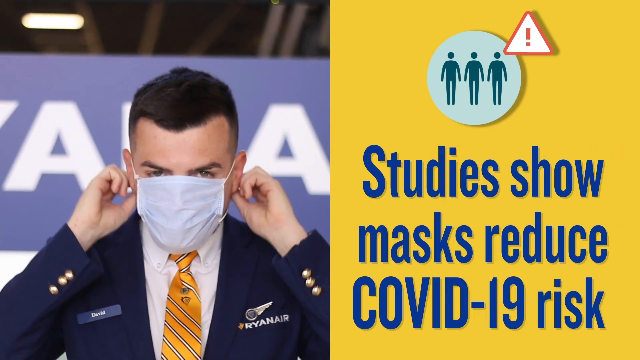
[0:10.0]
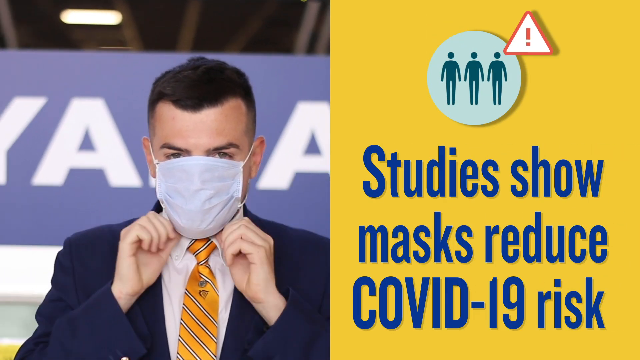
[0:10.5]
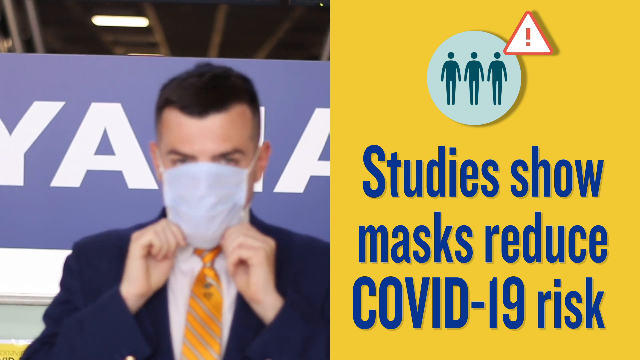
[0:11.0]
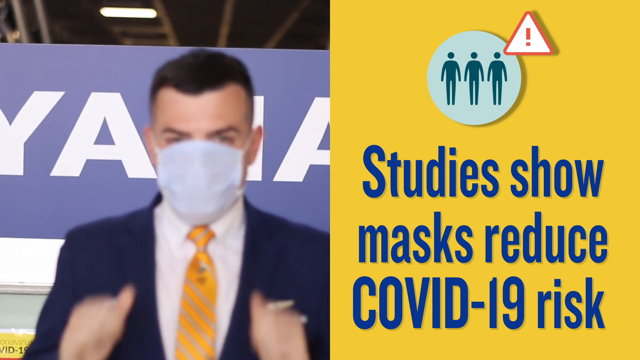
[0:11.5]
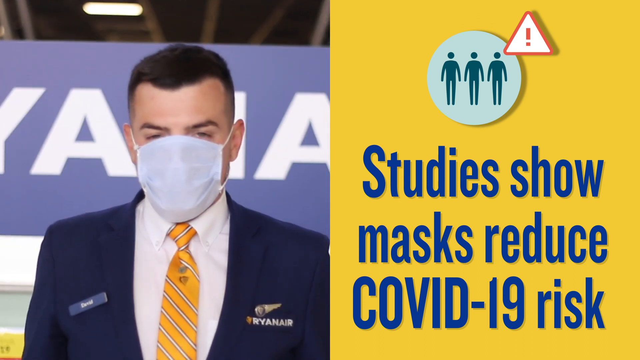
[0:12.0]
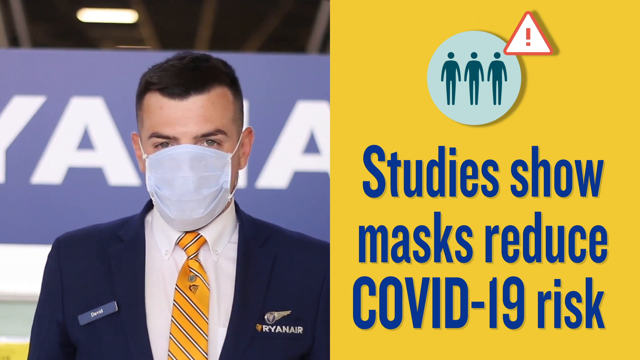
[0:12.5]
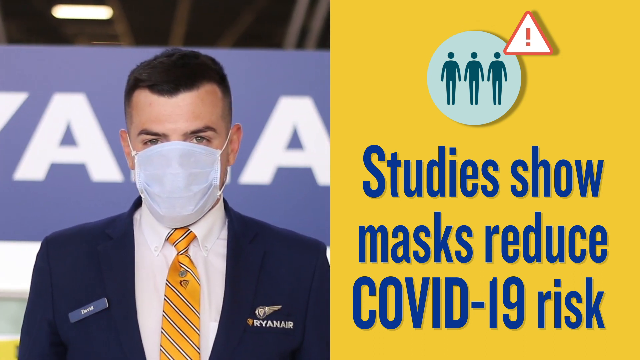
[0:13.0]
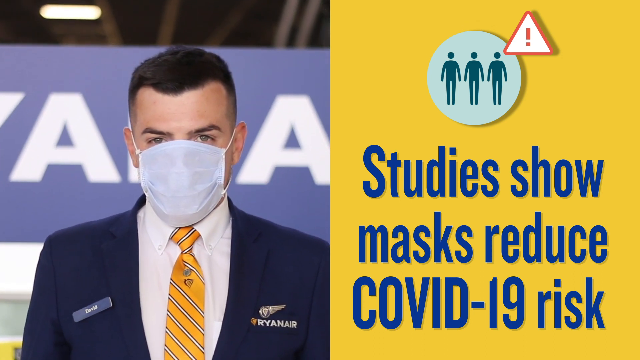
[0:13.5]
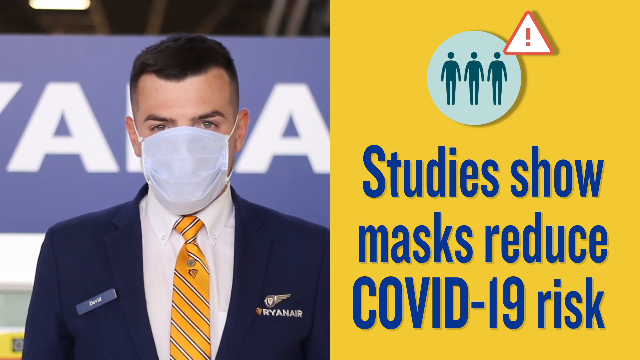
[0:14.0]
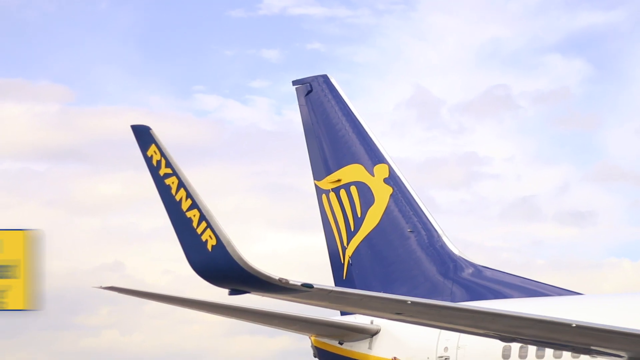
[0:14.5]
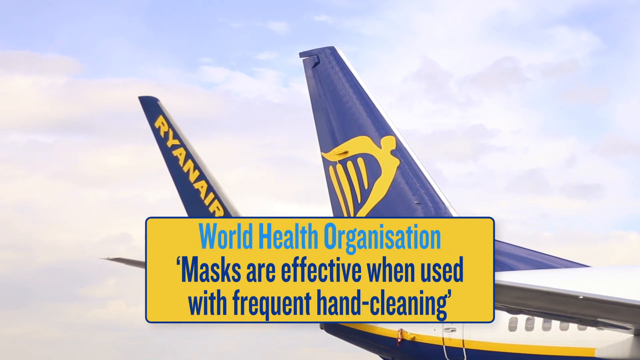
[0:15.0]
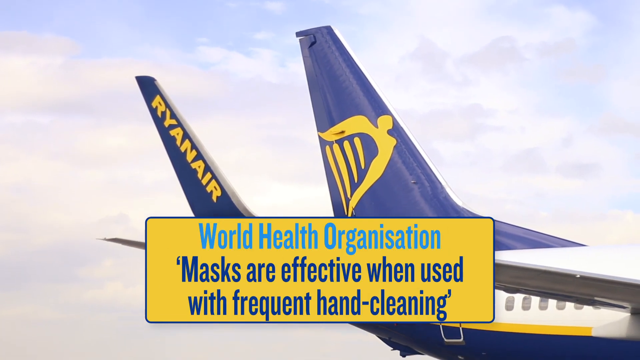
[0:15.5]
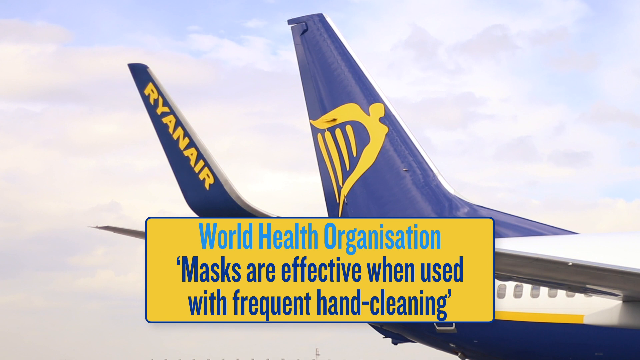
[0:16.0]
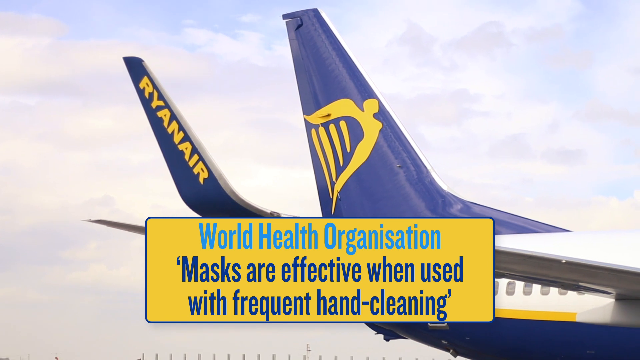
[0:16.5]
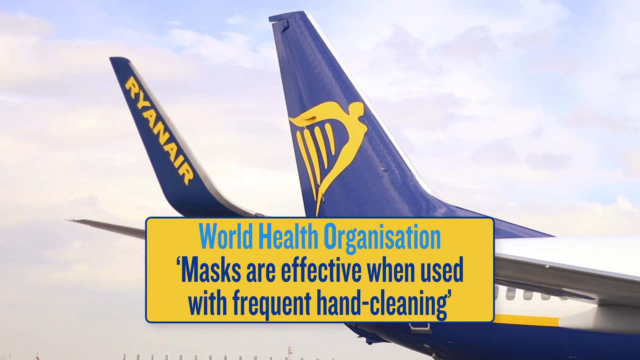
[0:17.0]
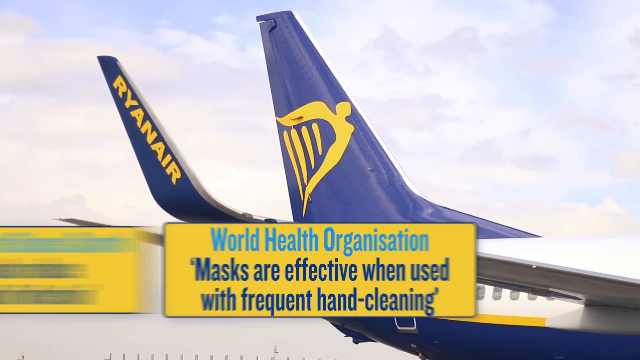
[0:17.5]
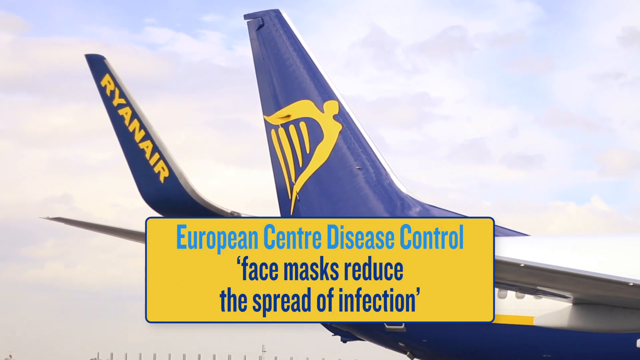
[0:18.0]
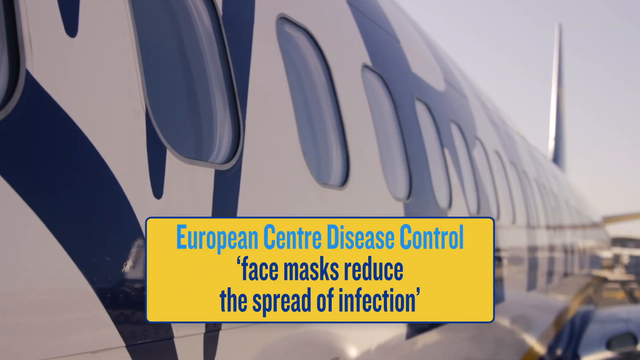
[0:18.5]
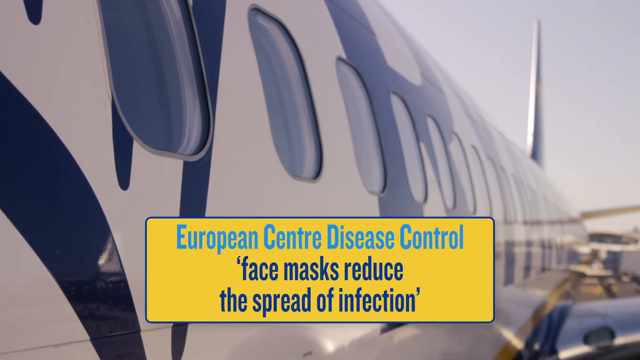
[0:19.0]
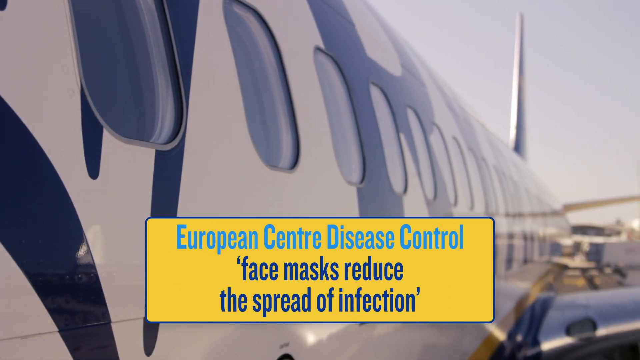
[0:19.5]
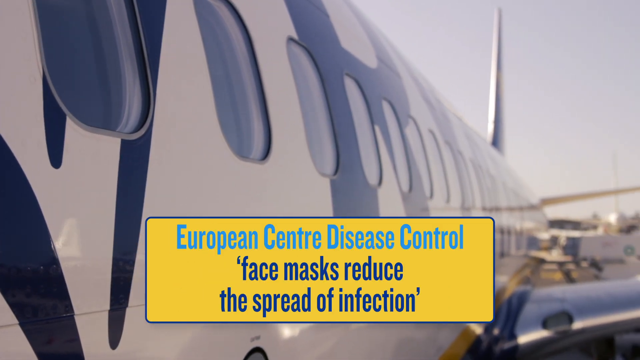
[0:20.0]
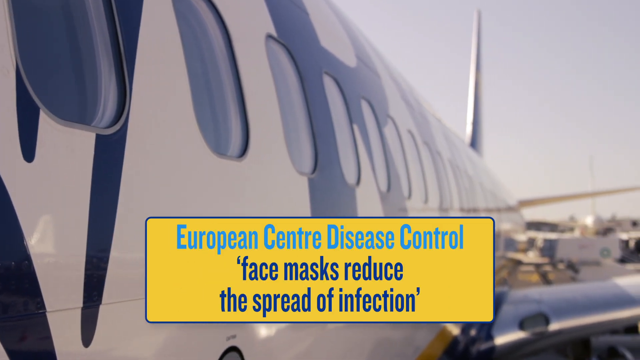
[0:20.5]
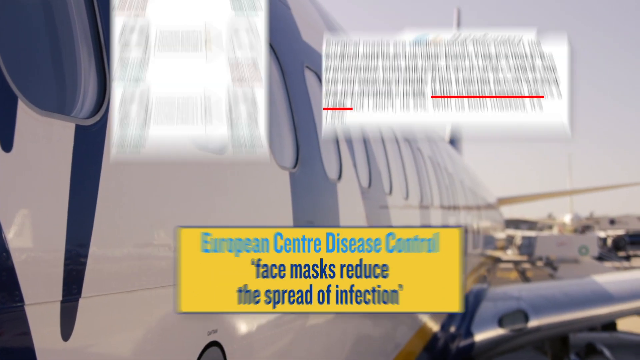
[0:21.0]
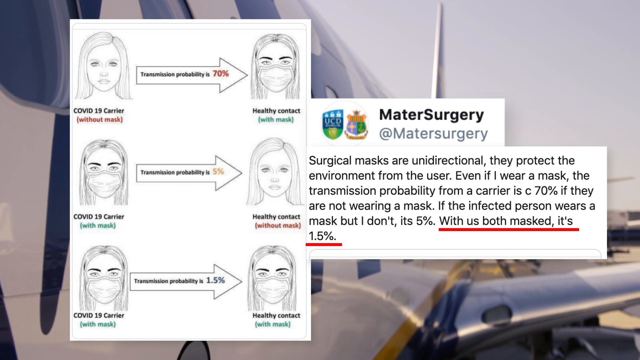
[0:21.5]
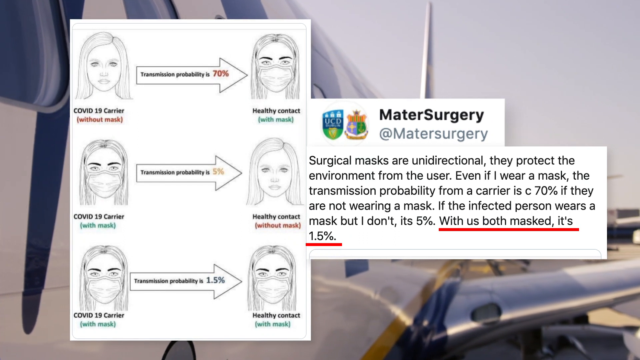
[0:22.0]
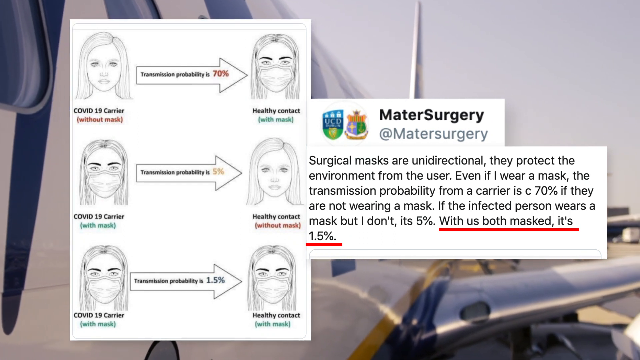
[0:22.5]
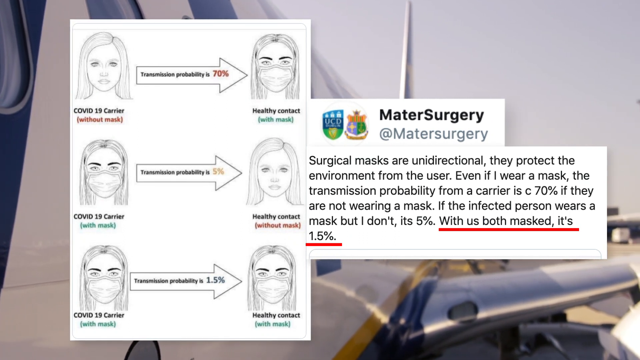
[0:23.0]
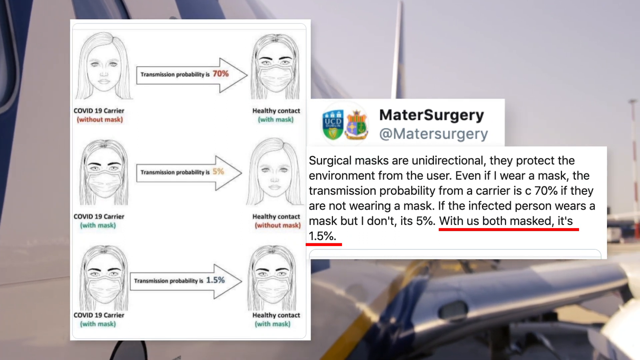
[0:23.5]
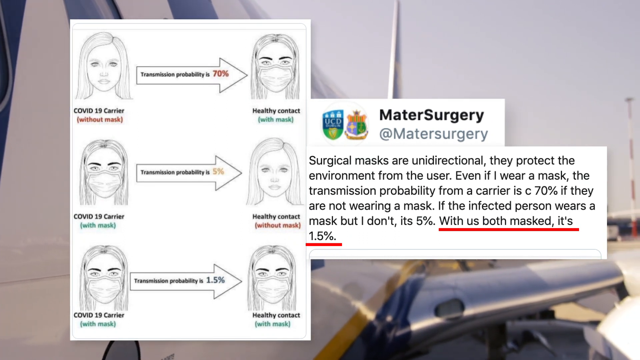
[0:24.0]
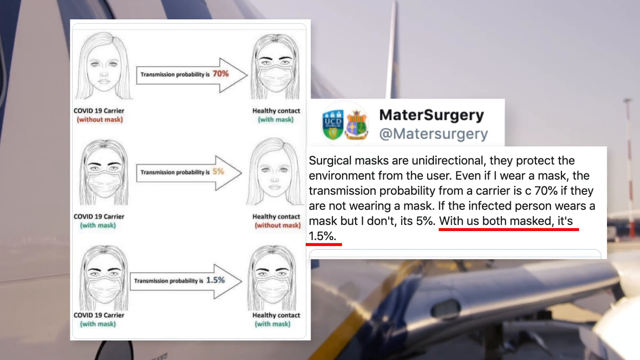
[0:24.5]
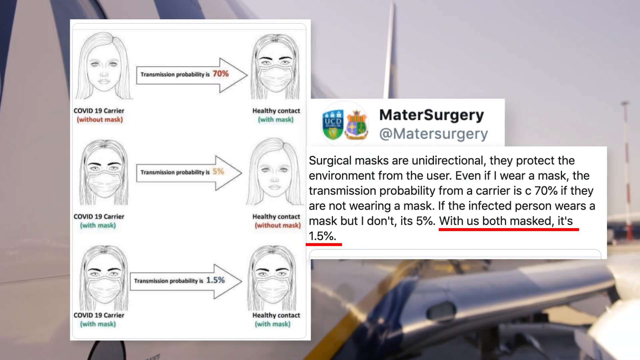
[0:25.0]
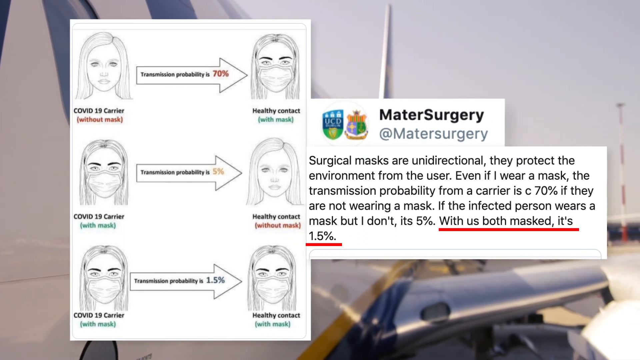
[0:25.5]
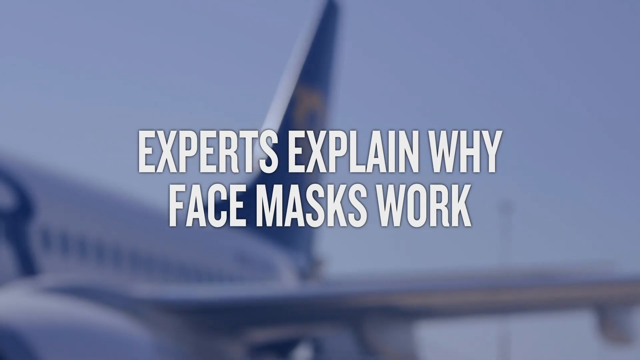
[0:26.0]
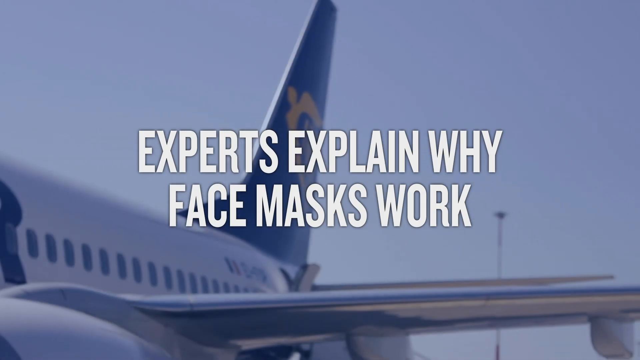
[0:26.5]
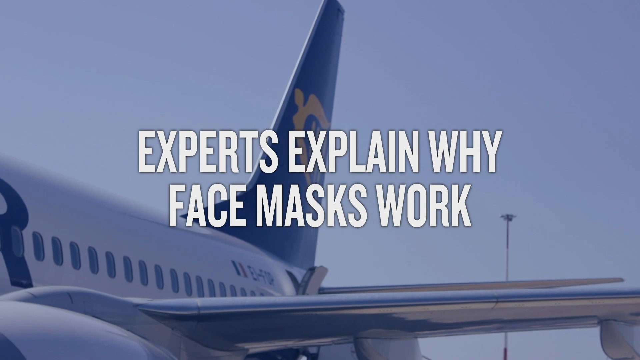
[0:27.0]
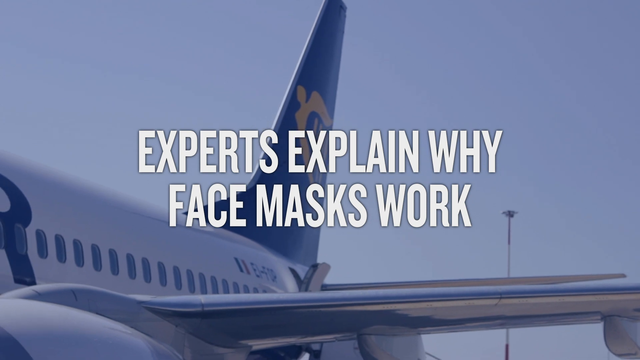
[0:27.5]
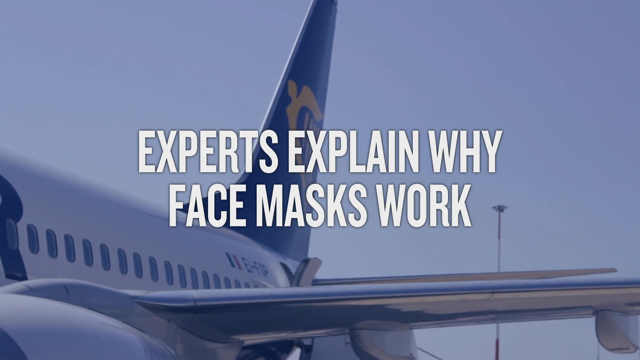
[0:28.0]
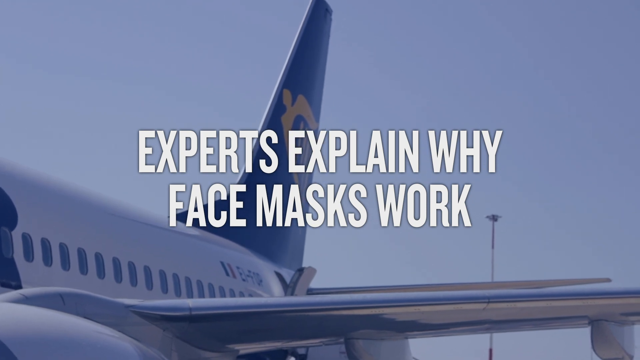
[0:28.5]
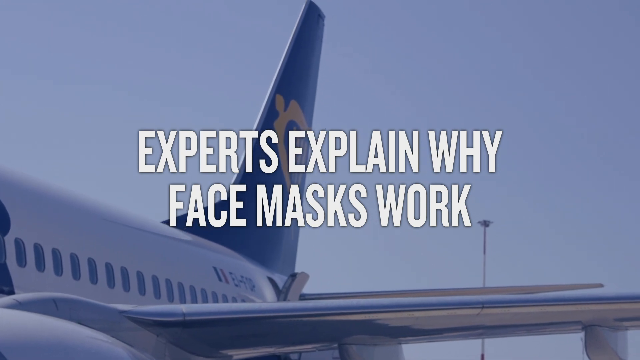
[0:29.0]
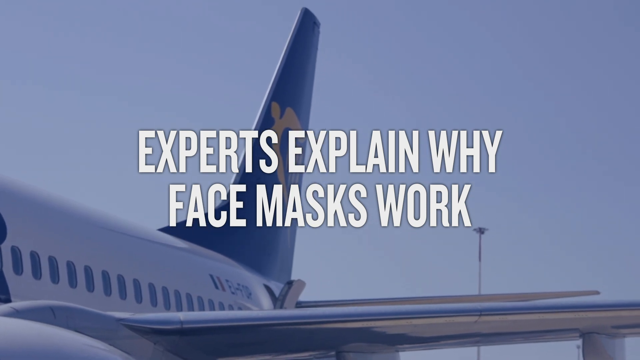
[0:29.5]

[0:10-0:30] A man uses both hands to place a mask on his face, putting the straps behind his ears. Behind him are the letters A, a line, and A in blue. He wears a blue suit and a yellow striped tie over a white shirt, with long sleeves that have three buttons on each sleeve toward the wrist. On his left lapel is a white, silver object with a point sticking out to the right and writing underneath. The left half of the screen shows the actual picture, and the right half shows writing: a gold area with a circle containing three cartoon silhouettes of people with round heads and just the shape of their bodies, a triangle with an exclamation point at the top right, and the text "Studies show masks reduce COVID-19 risk." The man continues to use his hands. The next screen shows "World Health Organization" and "European Disease Control." Images of masks and drawn people in masks flash by. A plane is shown in the air against a blue sky.